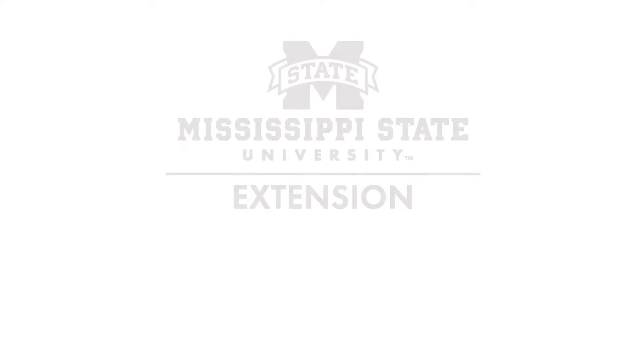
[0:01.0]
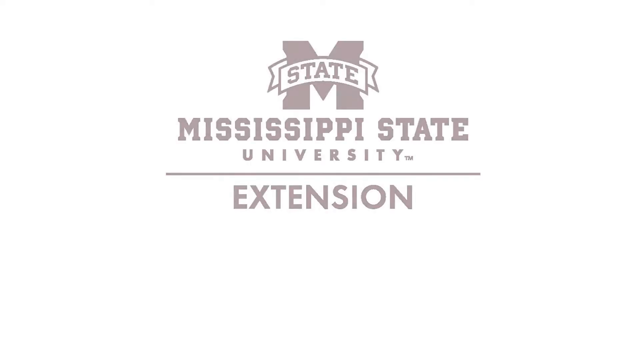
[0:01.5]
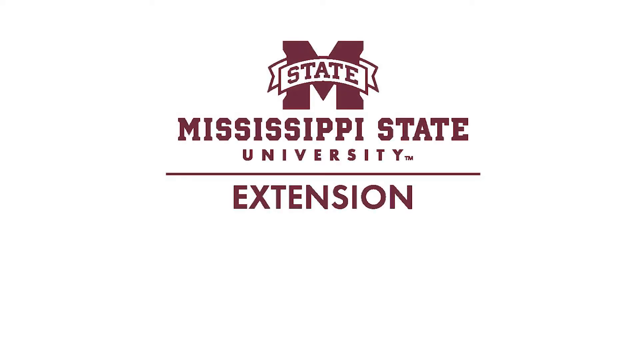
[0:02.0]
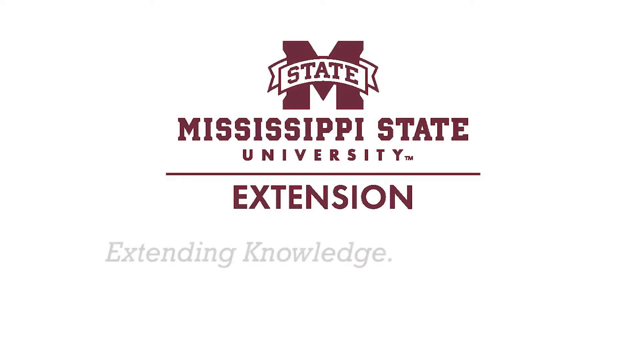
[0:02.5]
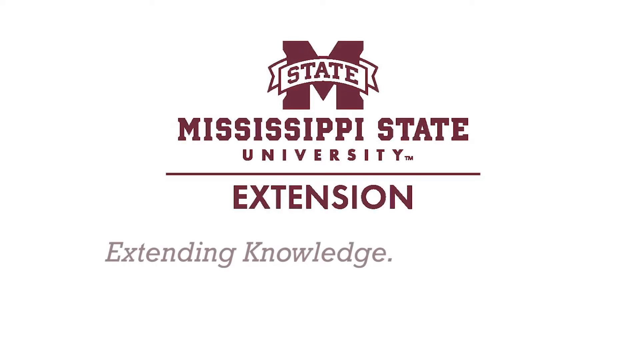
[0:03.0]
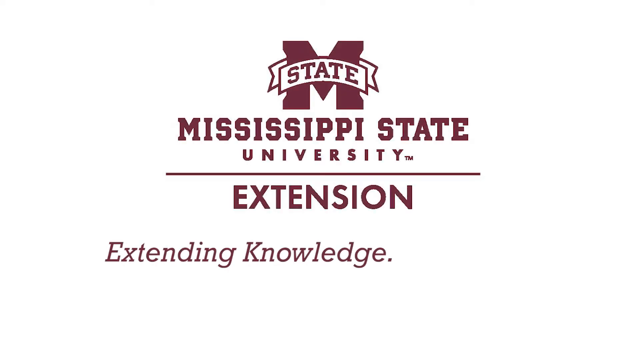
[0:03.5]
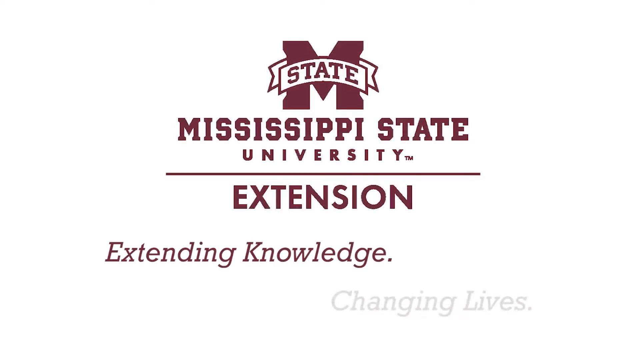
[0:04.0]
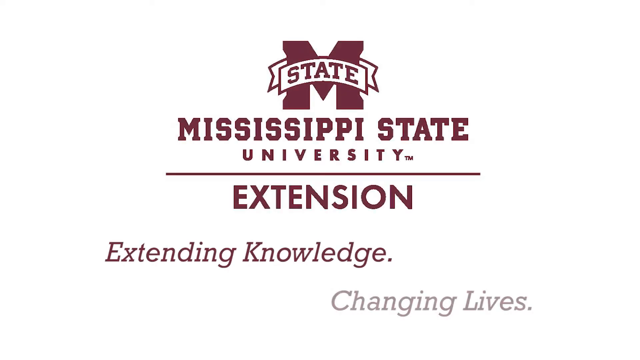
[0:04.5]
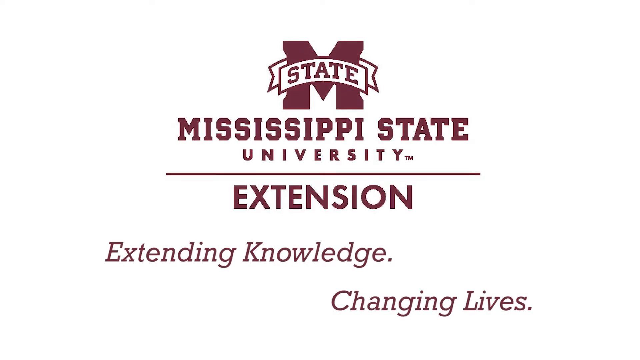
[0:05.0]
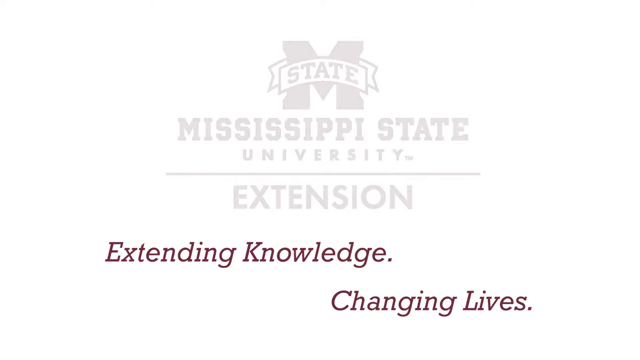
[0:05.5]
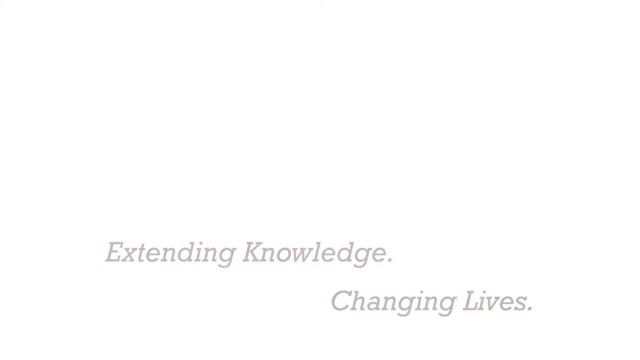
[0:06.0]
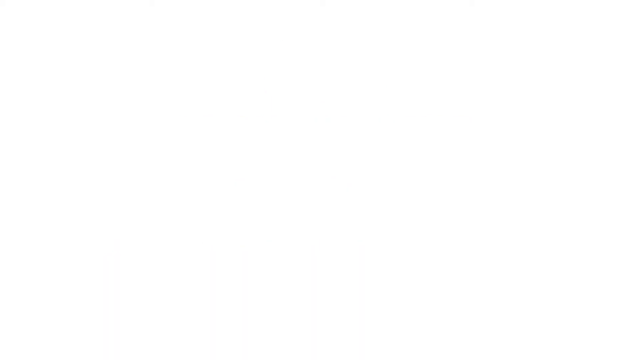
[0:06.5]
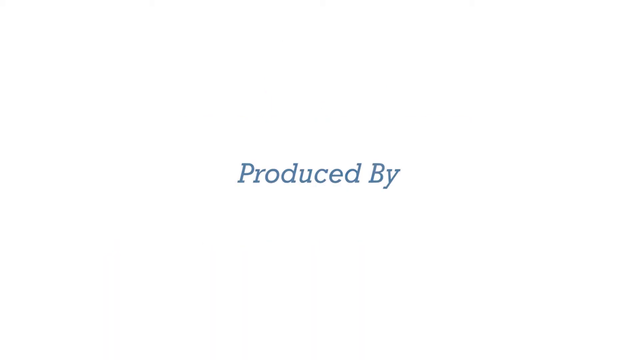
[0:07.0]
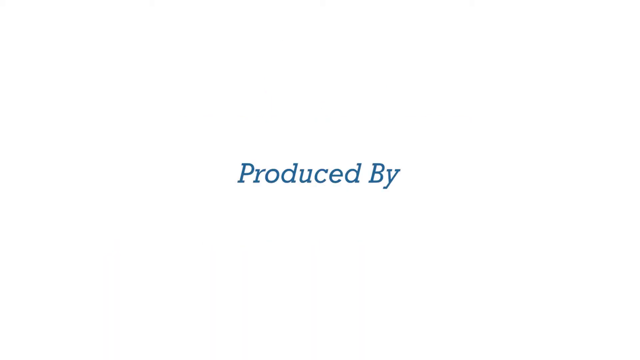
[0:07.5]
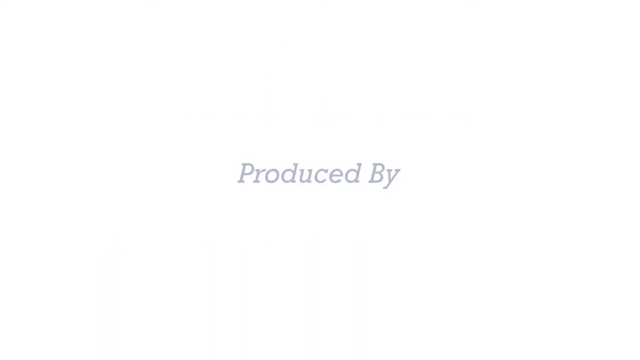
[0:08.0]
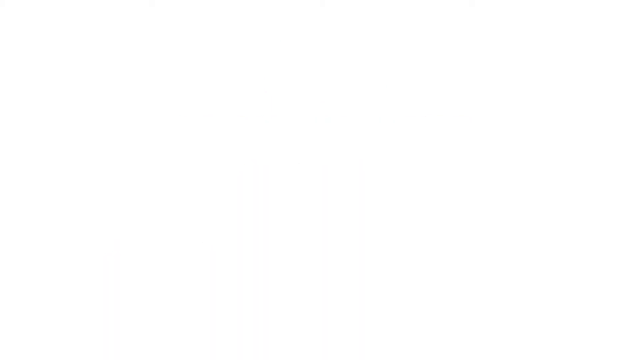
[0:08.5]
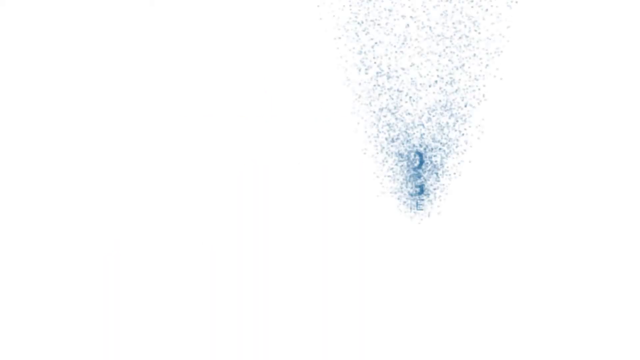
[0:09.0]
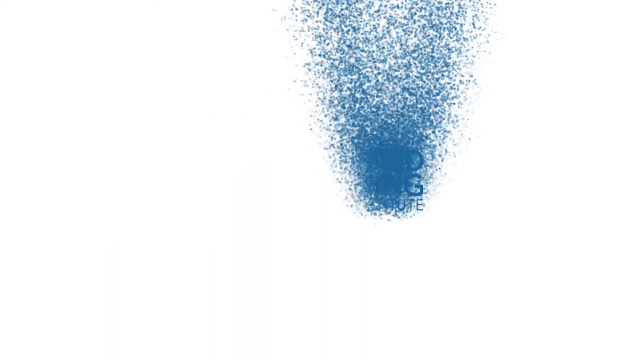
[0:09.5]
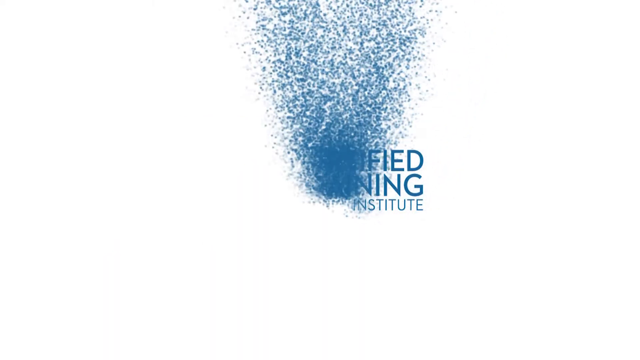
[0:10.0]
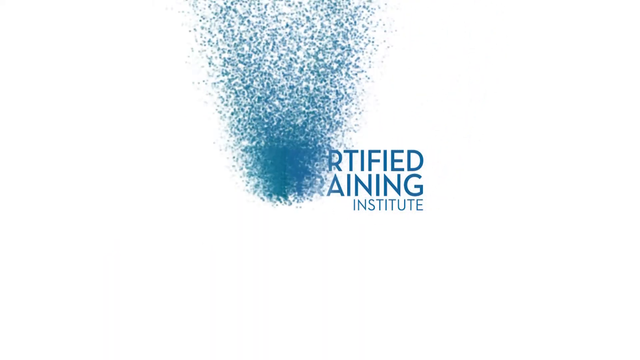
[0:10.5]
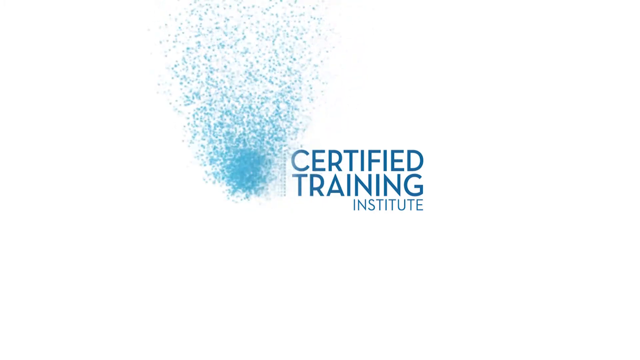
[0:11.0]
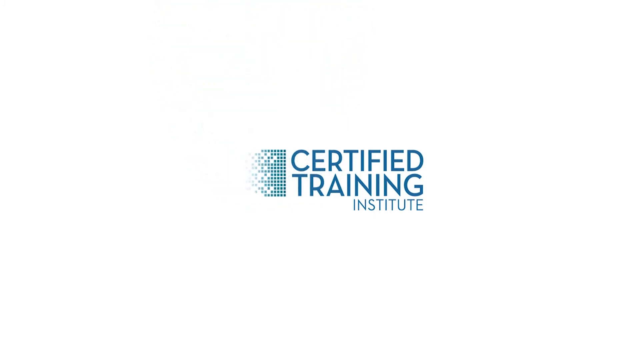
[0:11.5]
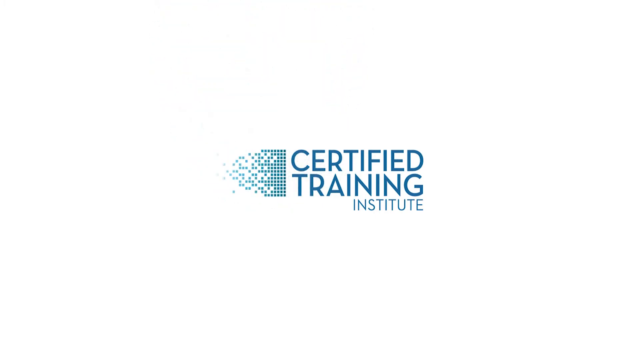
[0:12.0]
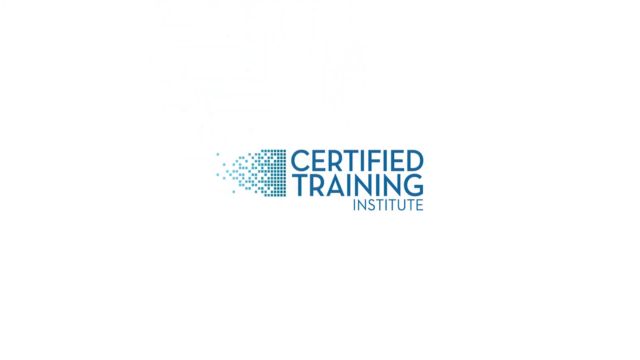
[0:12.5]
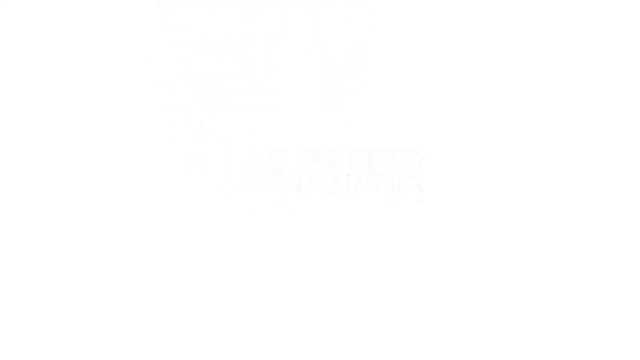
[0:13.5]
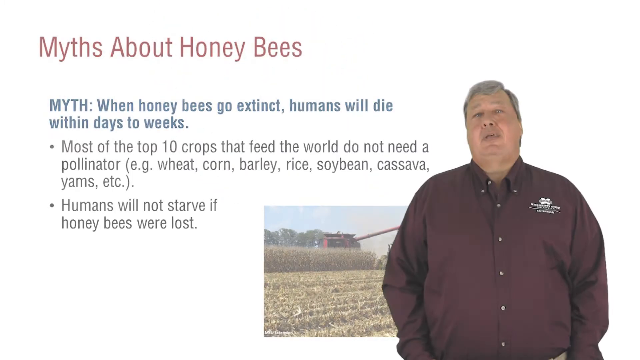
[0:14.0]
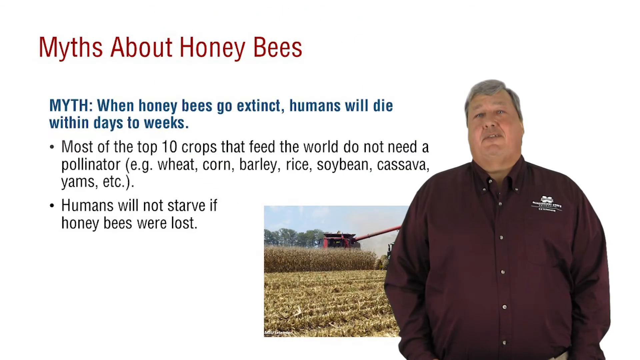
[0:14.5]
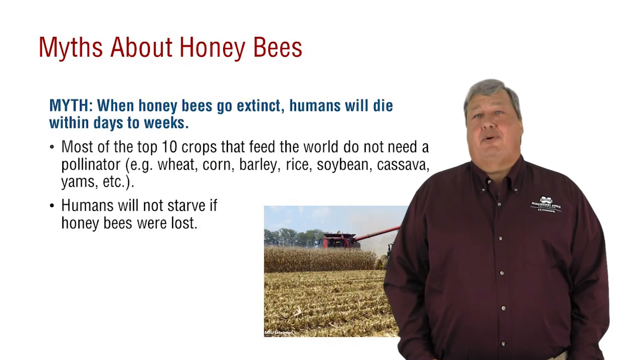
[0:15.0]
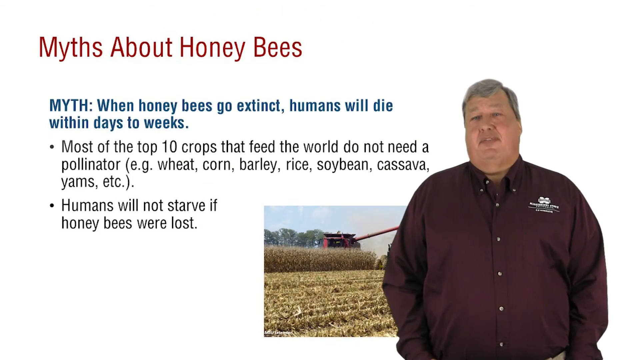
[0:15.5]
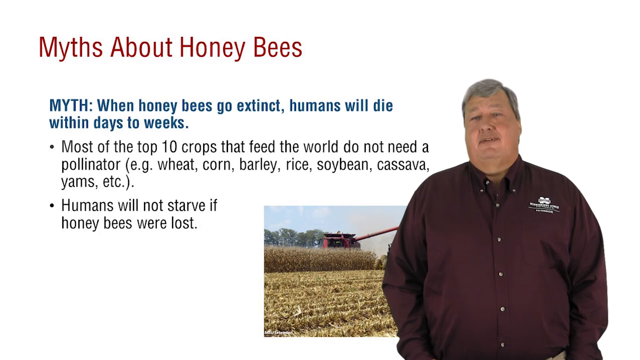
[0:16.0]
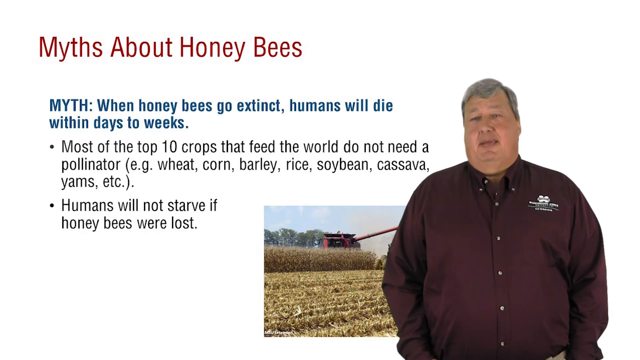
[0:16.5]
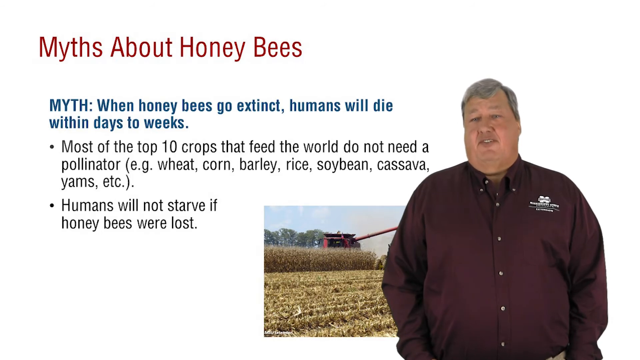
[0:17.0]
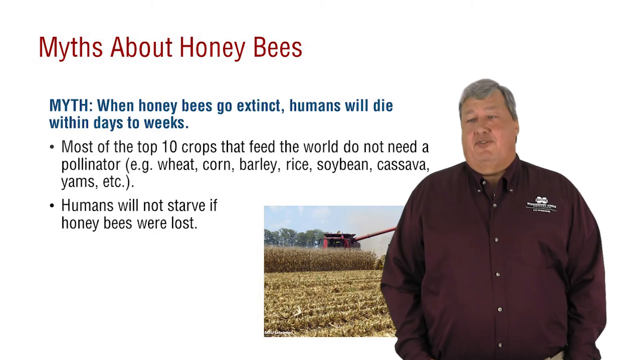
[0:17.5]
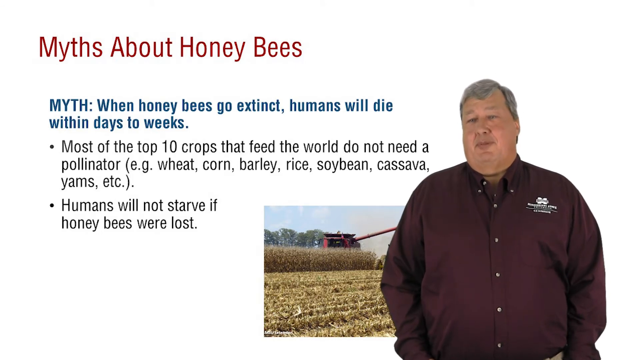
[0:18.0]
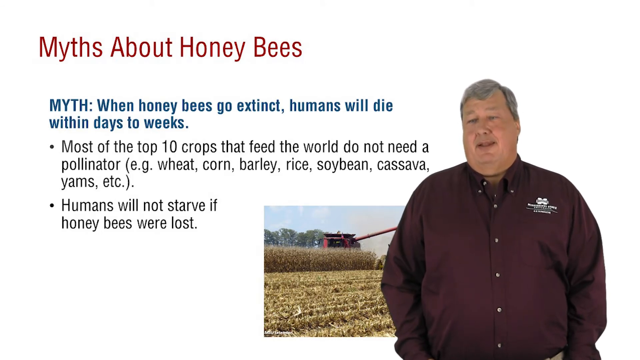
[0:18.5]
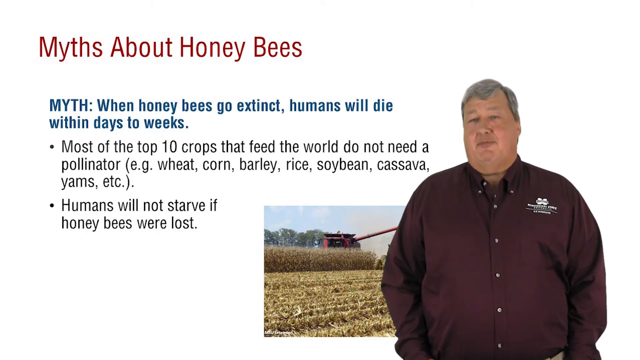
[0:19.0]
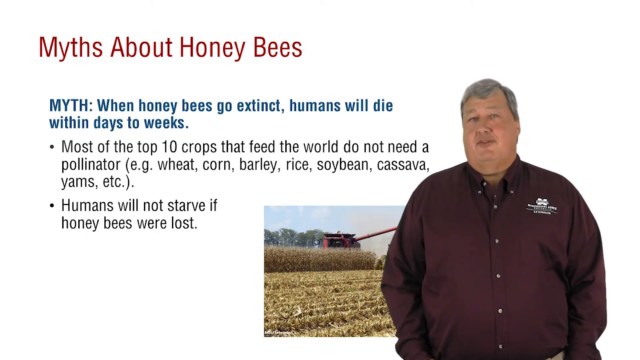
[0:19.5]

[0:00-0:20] The video begins on a white screen with a Mississippi State University logo at the top in the middle. Underneath it reads "Extension," and below that "Extending Knowledge, Changing Lives." The screen changes, and in the middle, in blue font, it reads "Produced by Mississippi State University," followed by the logo for Certified Training Institute. Next comes a slide with a heading at the top left in brown letters reading "myths about honeybees." Below it, in smaller blue text: "Myth: When honeybees go extinct, humans will die within days to weeks." Underneath are two bullet points in black text. The first reads "most of the top 10 crops that feed the world do not need a pollinator (e.g. wheat, corn, barley, rice, soybean, cassava, yams.)" The second reads "humans will not starve if honeybees were lost." To the right of that is a picture of what looks like a field of crops growing on a farm, with a large red farming vehicle in the distance. On the right side of the screen, a large man with grayish hair and a cleanly shaved face, wearing a maroon button-up shirt, is speaking, apparently giving the presentation about myths about honeybees.